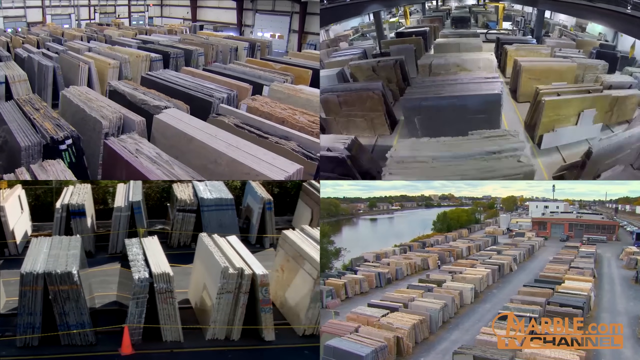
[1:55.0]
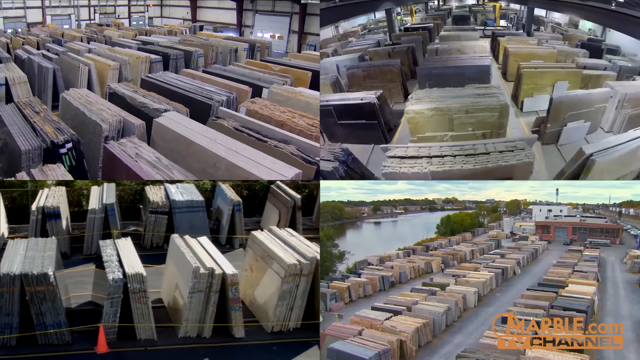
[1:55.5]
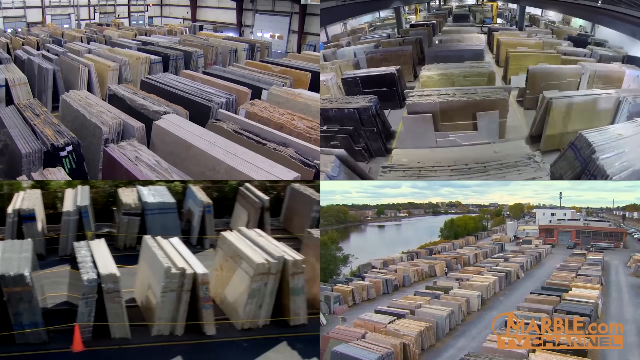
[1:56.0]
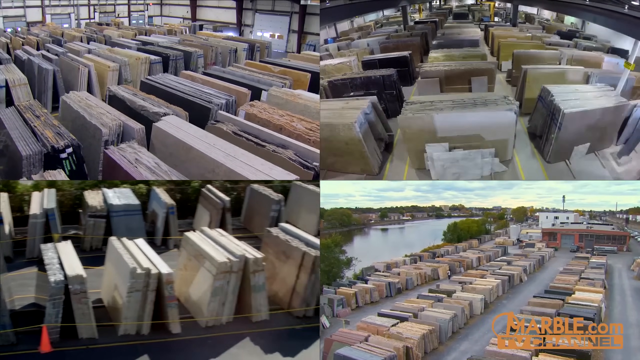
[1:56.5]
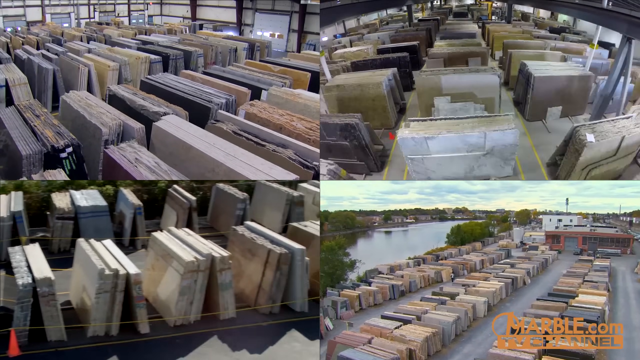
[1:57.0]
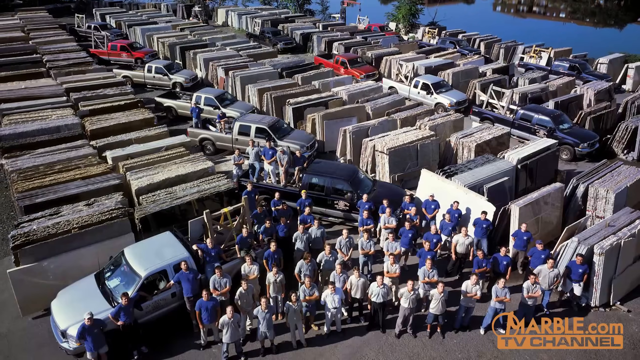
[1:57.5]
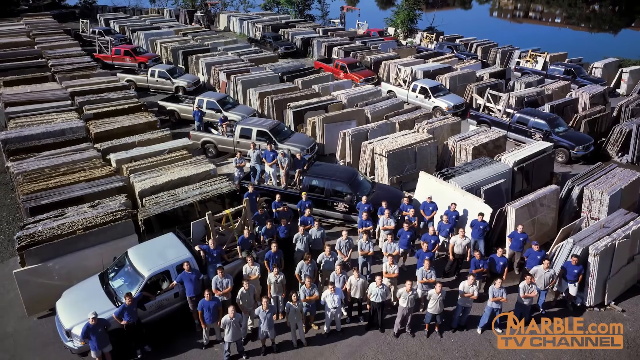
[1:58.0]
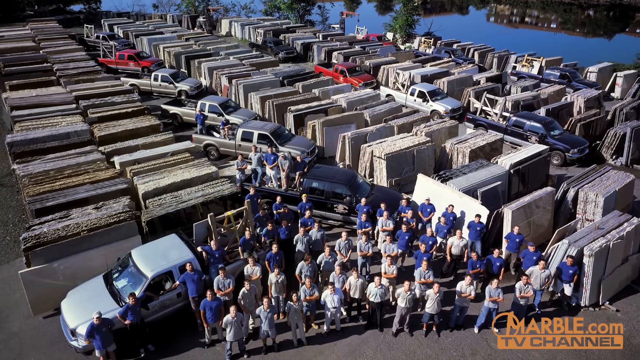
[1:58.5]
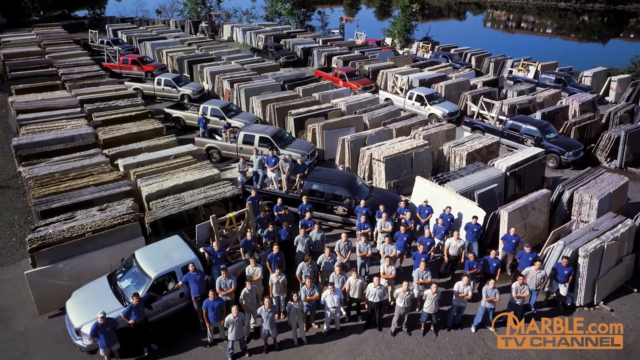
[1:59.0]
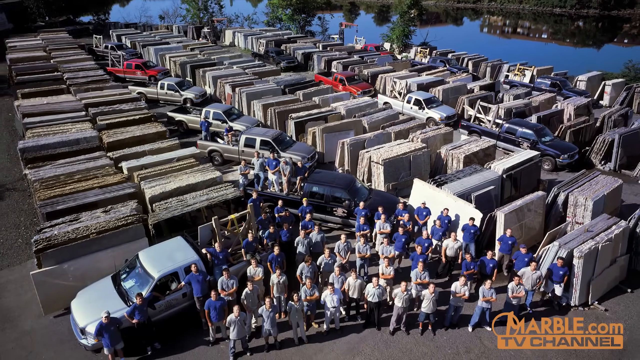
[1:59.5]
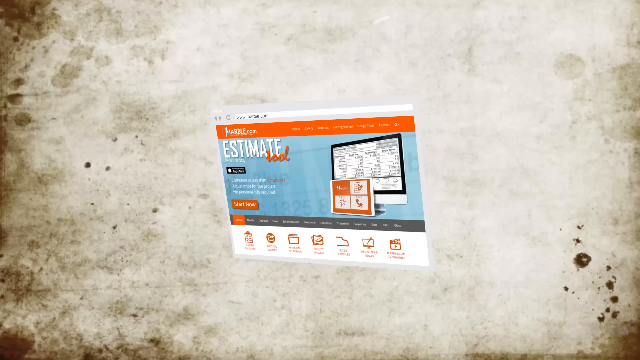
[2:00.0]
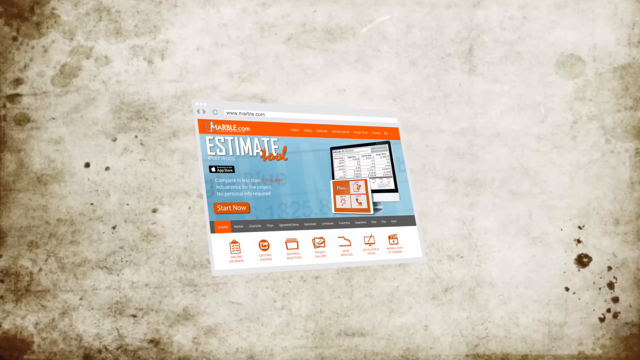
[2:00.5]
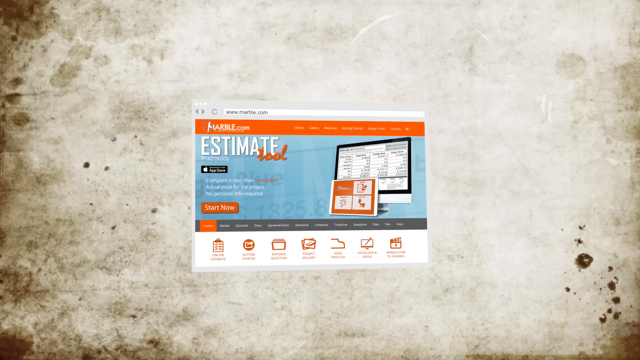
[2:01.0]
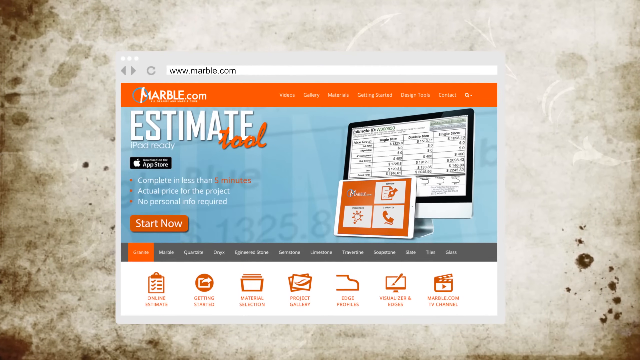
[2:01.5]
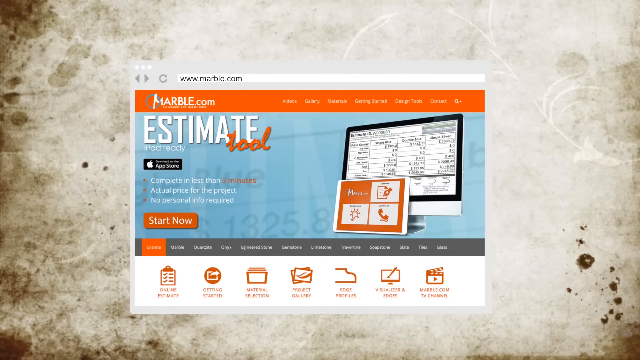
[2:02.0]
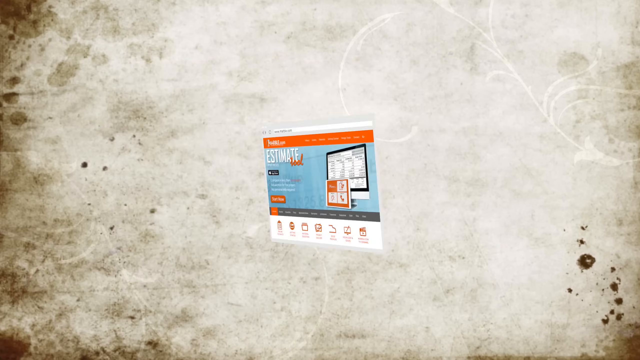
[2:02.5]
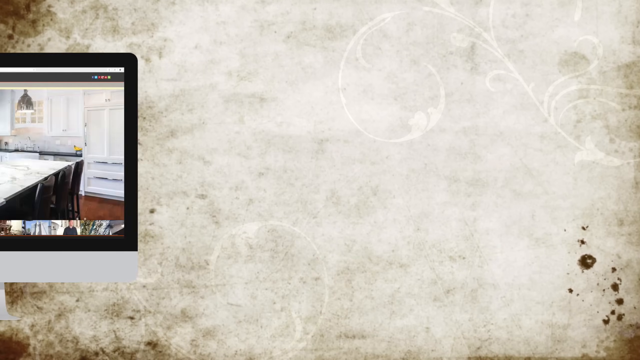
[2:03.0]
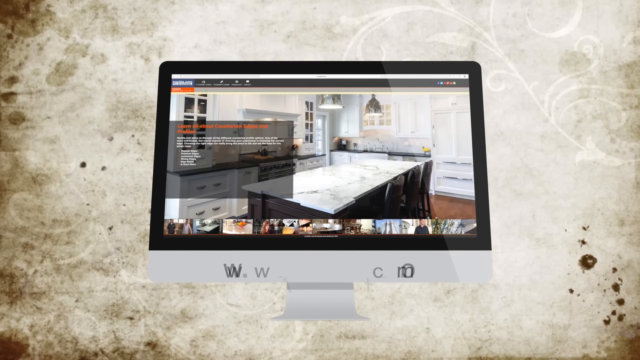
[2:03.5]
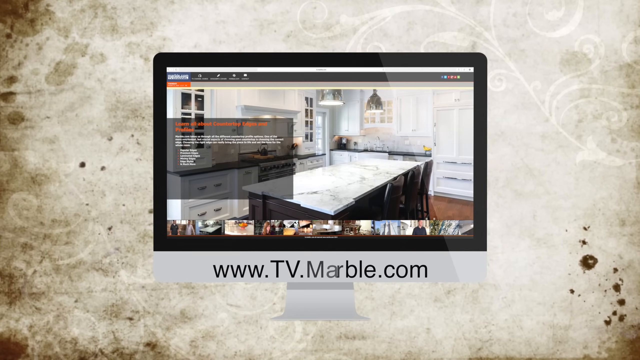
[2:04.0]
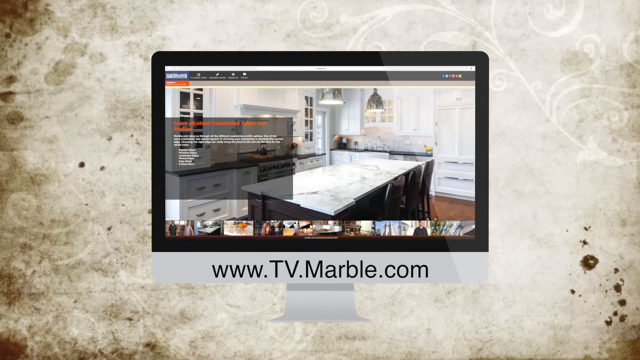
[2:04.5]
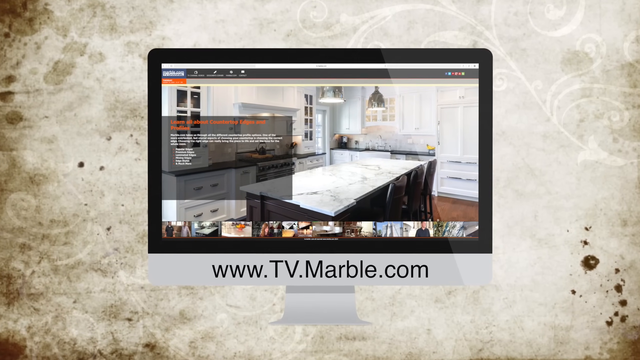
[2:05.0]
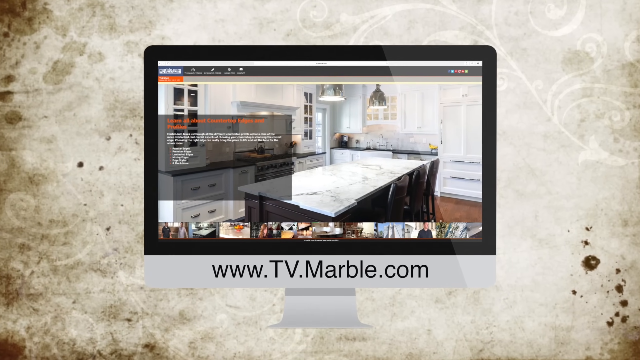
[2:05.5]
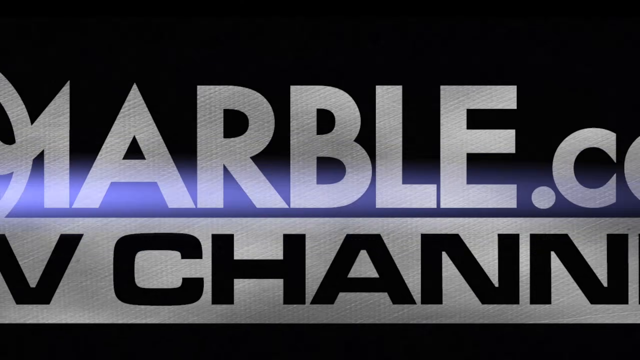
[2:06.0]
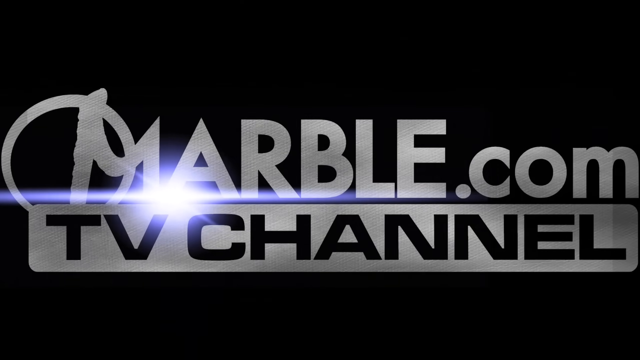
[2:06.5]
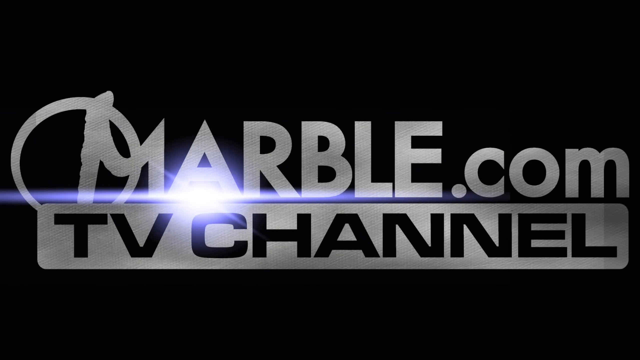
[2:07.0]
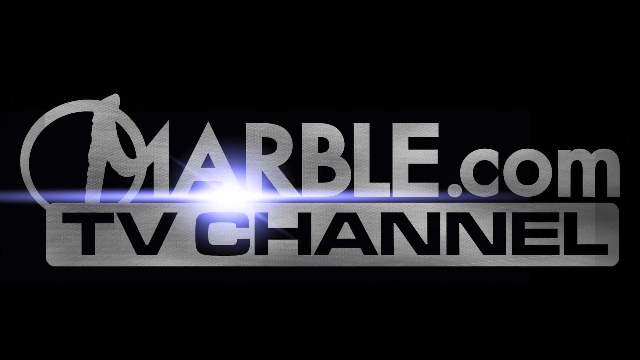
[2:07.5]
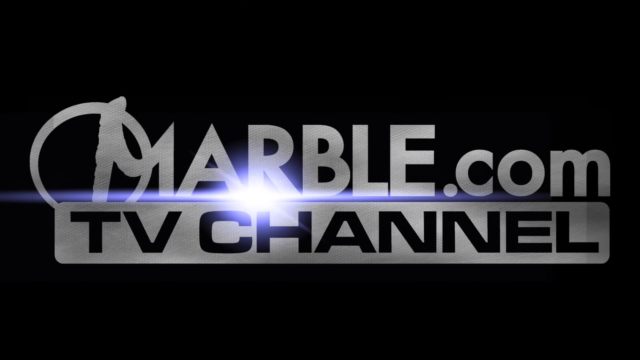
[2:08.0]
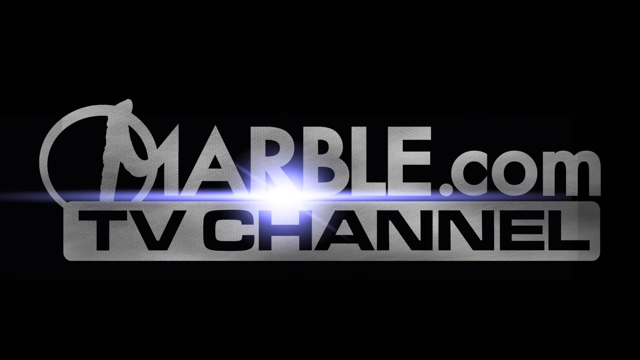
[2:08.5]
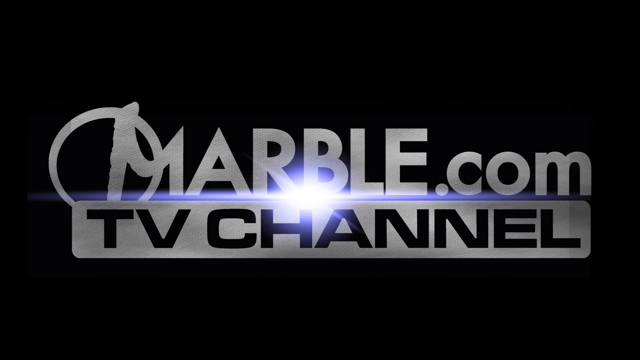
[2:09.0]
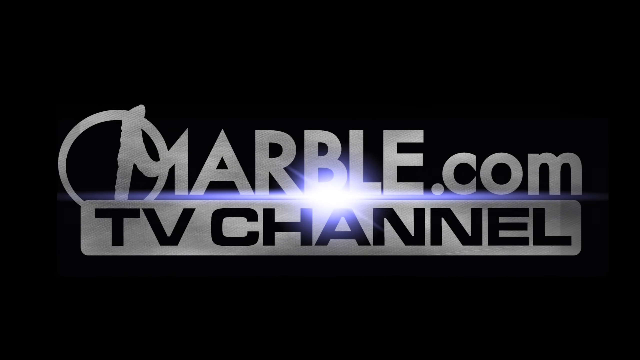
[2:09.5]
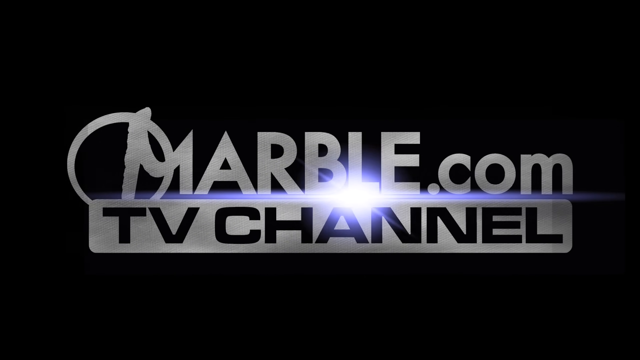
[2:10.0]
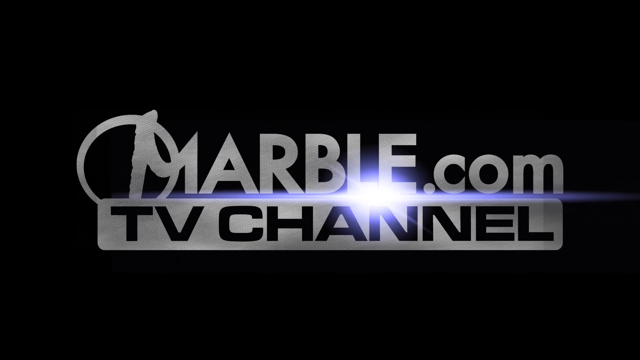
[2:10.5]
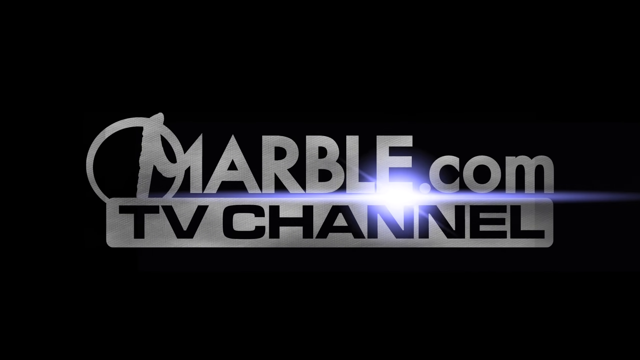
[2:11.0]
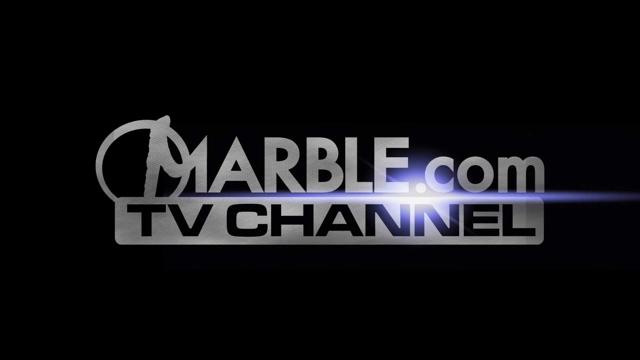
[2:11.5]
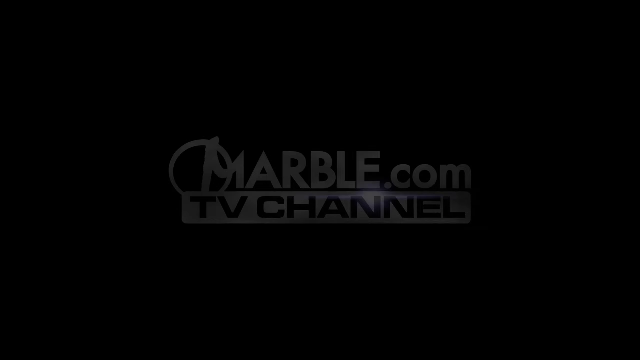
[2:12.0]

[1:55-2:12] The screen is split into four different sections, each panning over what looks like yards of different kinds of marble, all cut and stacked neatly, probably to go on to its next location. The video changes to a picture of another such yard, with several trucks parked between the stacks of marble. In the foreground are a bunch of people who look to be workers, in either grey shirts or blue shirts, all looking in the direction of the person taking the photo. Next is a picture of the marble.com website, which seems to be advertising an available estimate tool. After a little animated moment, it changes to another screen, "www.tv.marble.com", showing a picture of a kitchen island with some of the marble. Last, the screen goes black and shows the marble.com logo again, with text underneath reading "TV channel".